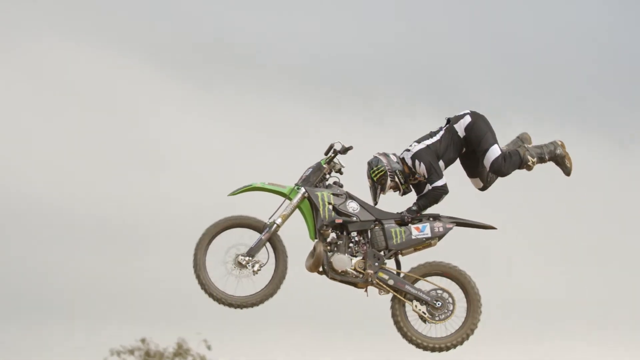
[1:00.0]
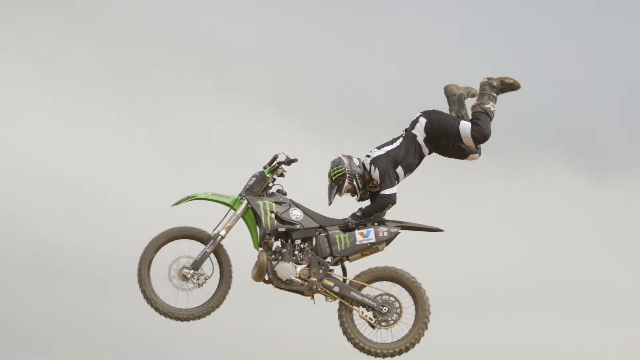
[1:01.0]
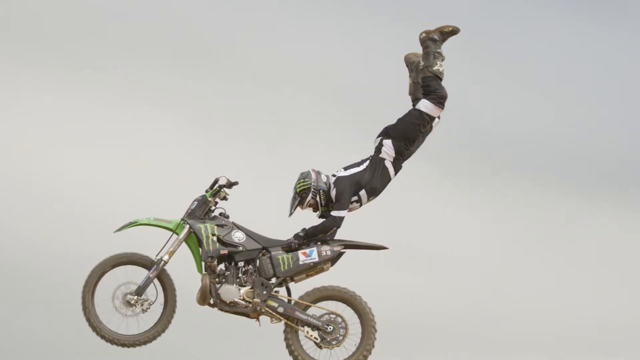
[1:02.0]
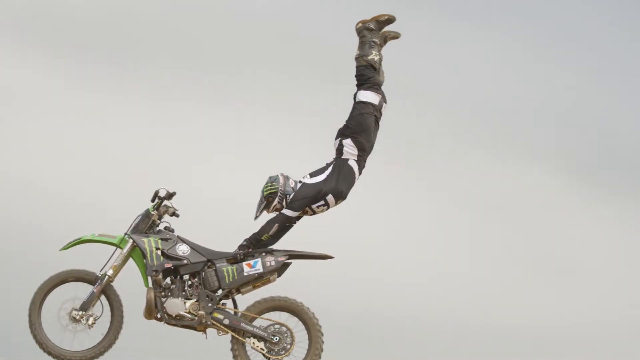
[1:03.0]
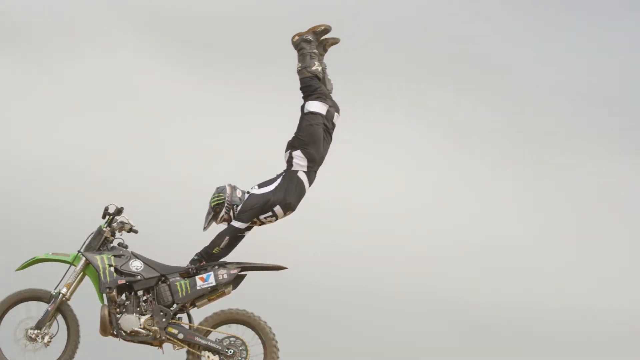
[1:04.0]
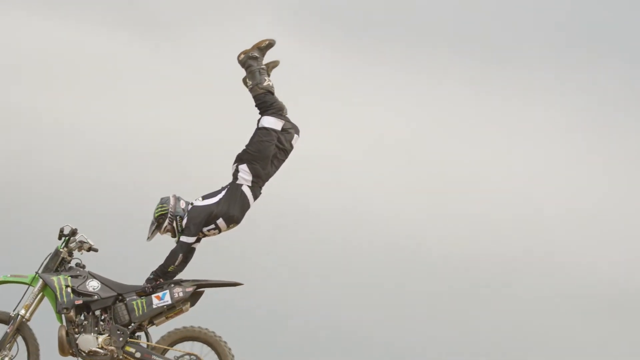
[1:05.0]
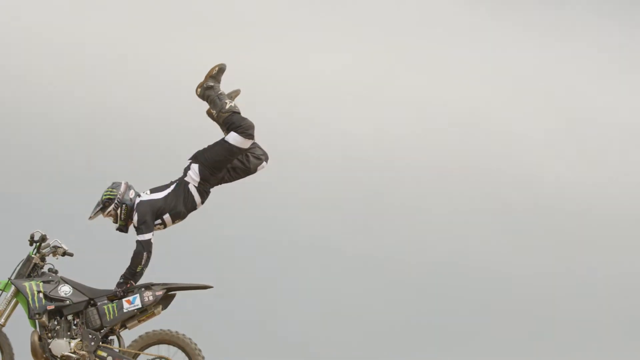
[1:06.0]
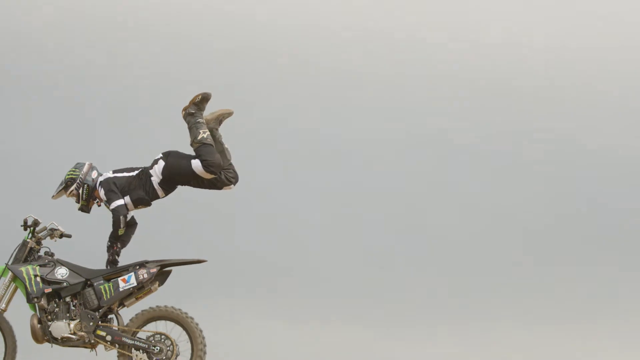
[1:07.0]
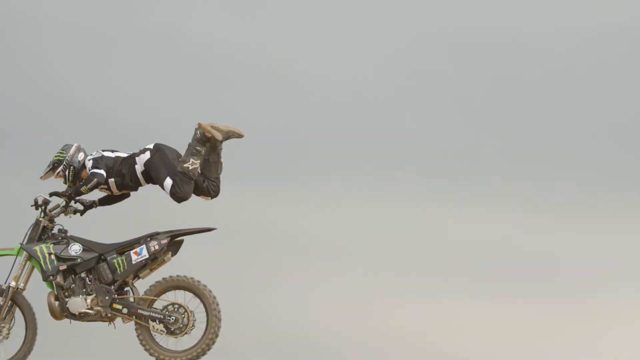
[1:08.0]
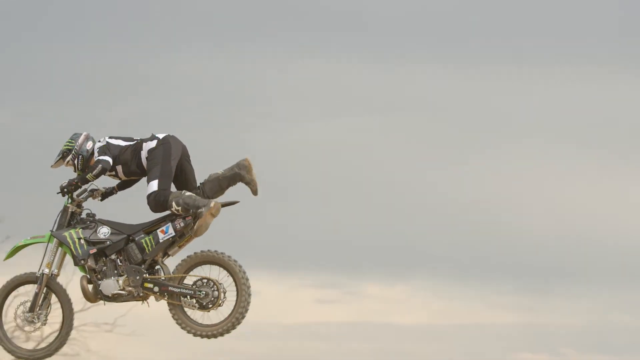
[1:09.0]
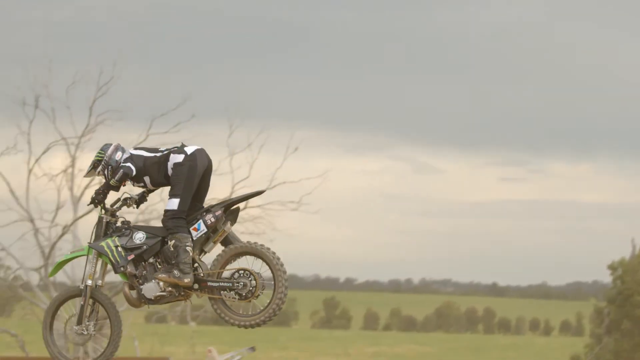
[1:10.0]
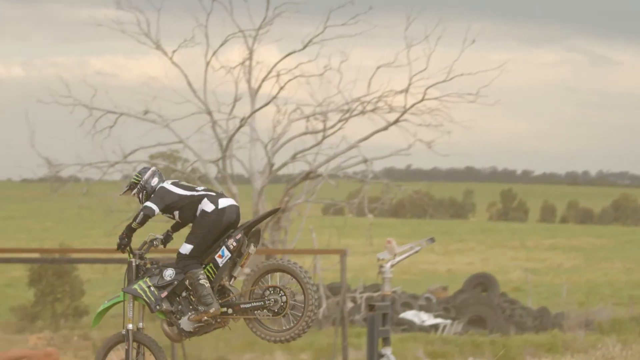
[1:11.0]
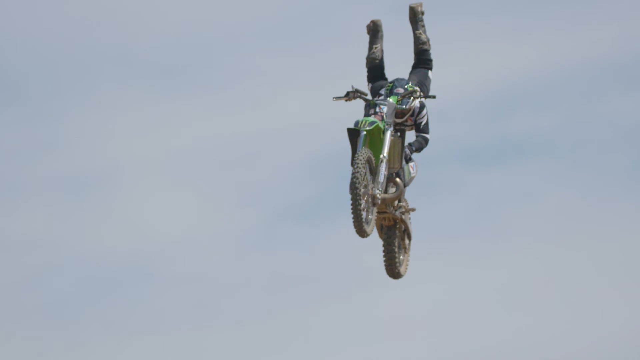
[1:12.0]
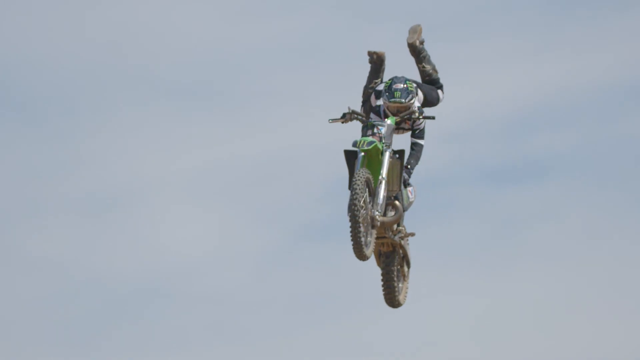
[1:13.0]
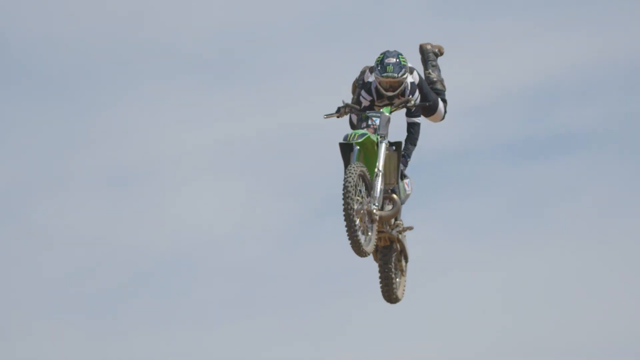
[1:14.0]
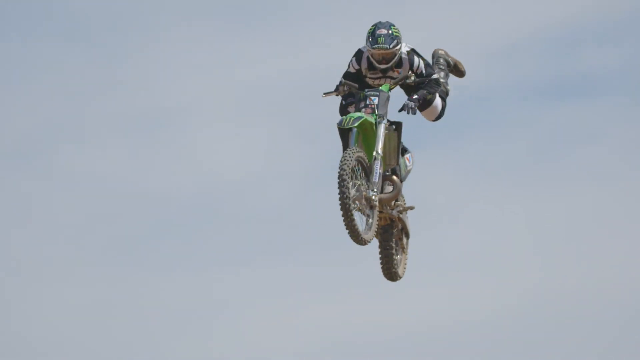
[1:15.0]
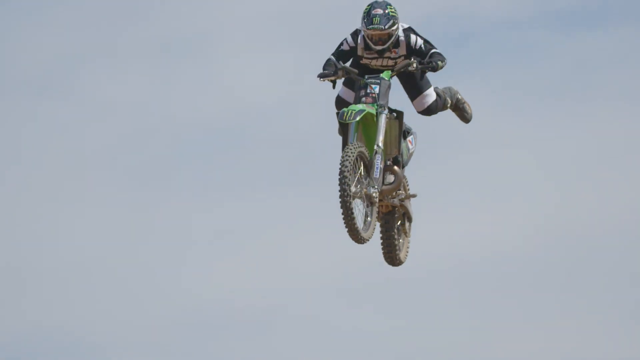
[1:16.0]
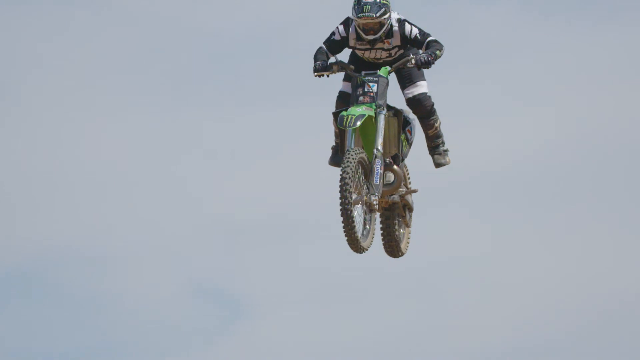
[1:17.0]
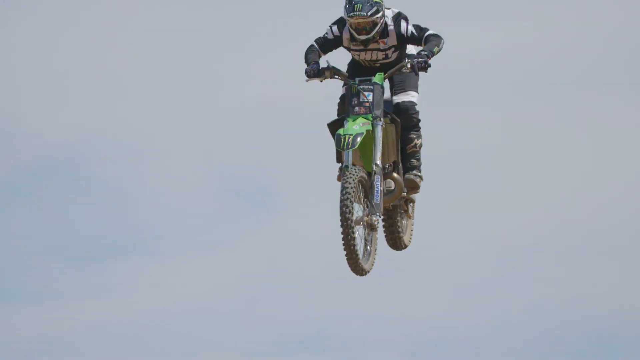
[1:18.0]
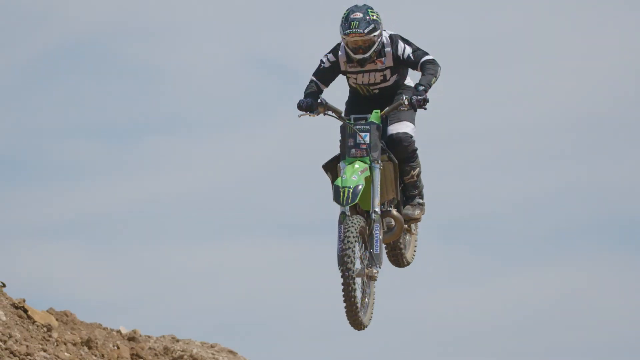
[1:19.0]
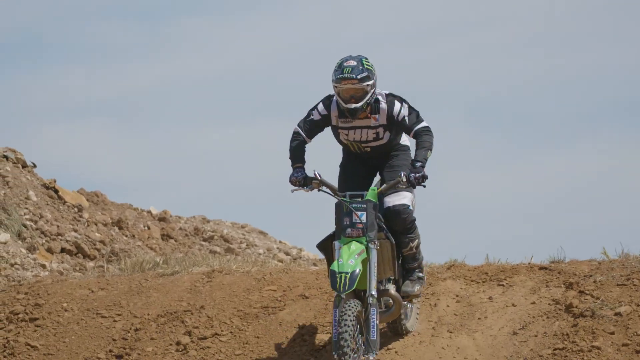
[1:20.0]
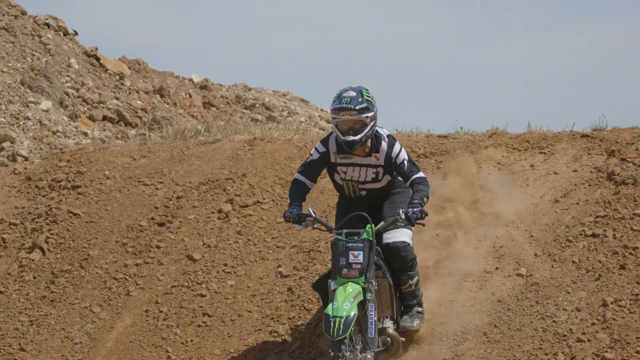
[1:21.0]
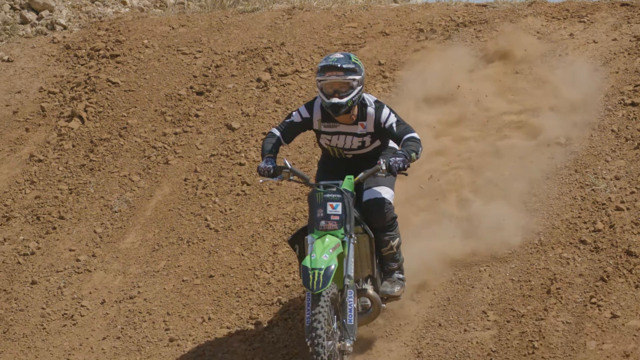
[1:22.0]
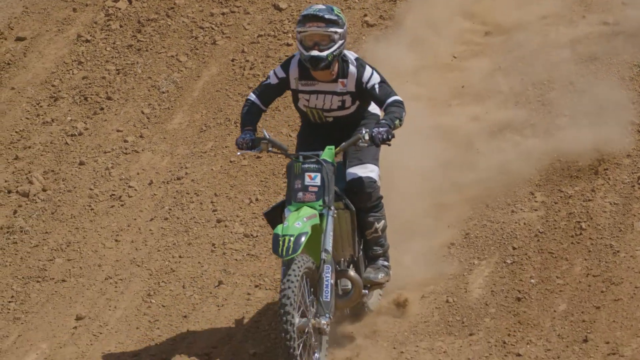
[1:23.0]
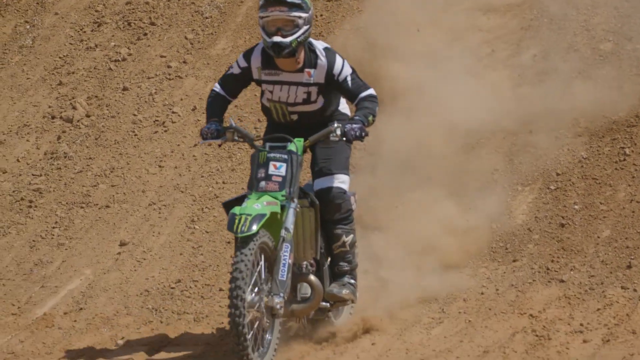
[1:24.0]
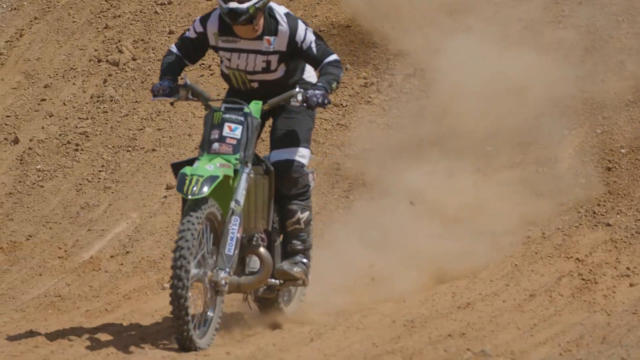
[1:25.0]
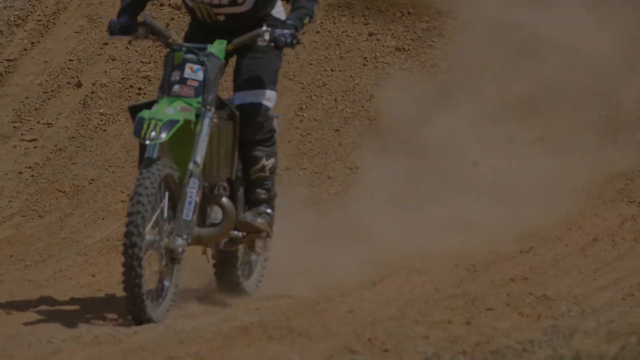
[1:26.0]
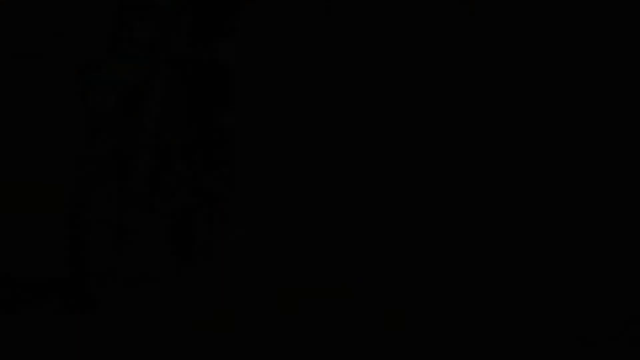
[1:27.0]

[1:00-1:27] His form shows a straight back, with his head staying parallel with the bike. His knees kick up, he straightens his legs and whole body, and he arches as he holds onto the bike. He then pushes himself forward and grips the handlebars, his legs spread and his feet angled so that when he falls they land right onto the pedals. A view from the front shows his uniform billowing in the wind. When he lands, he grips the handles but keeps a slightly standing position. He kicks up dust as he drives down the dirt path, standing with his back bent, leaning forward with his elbows back. The video zooms in on his feet and fades to black.